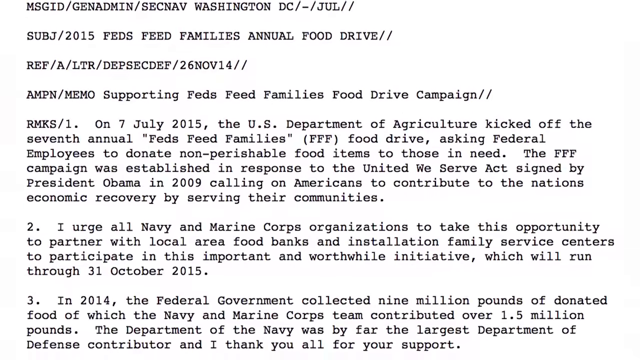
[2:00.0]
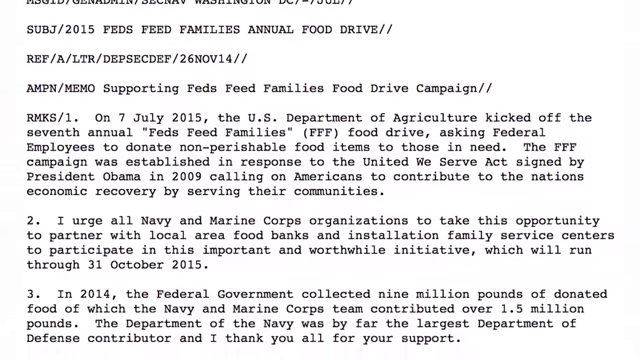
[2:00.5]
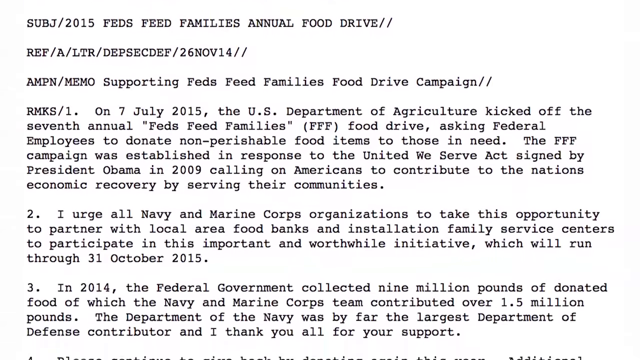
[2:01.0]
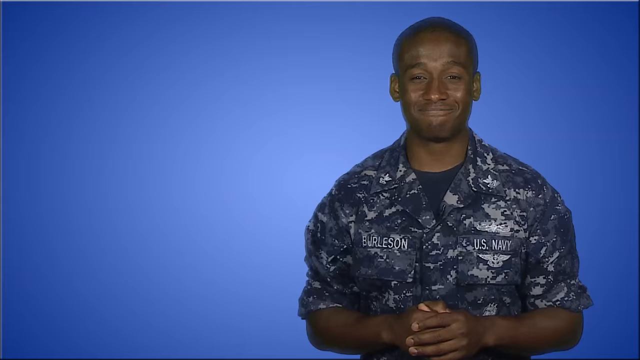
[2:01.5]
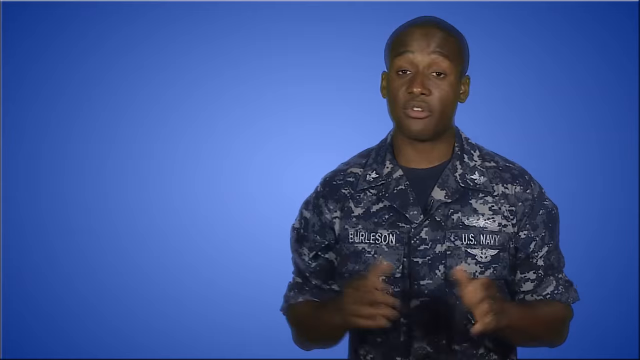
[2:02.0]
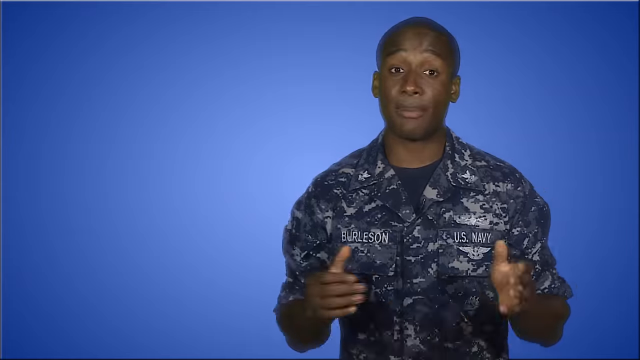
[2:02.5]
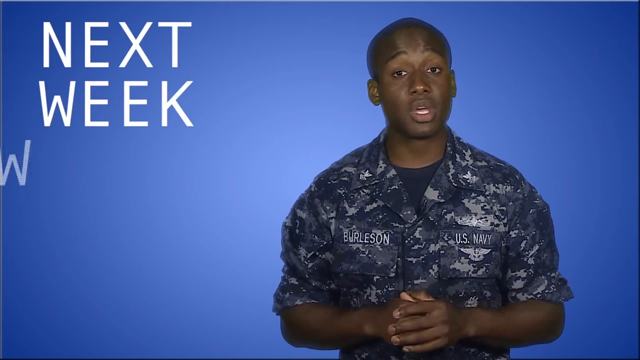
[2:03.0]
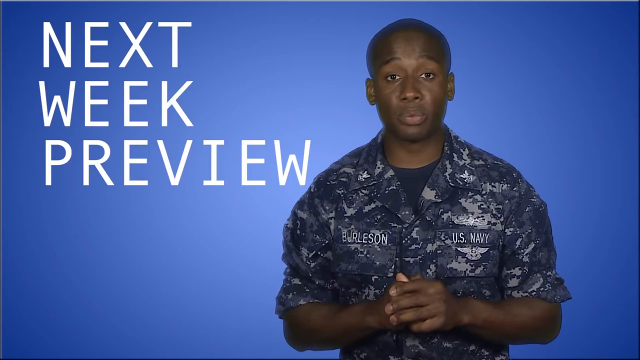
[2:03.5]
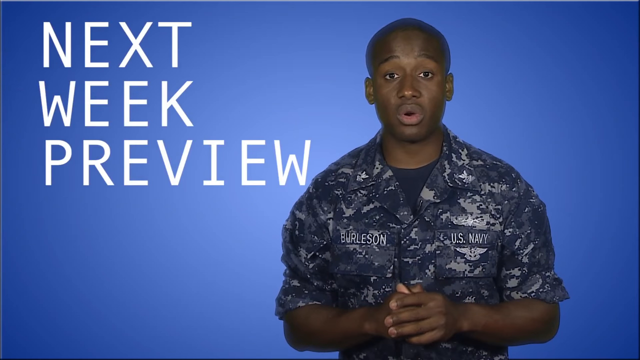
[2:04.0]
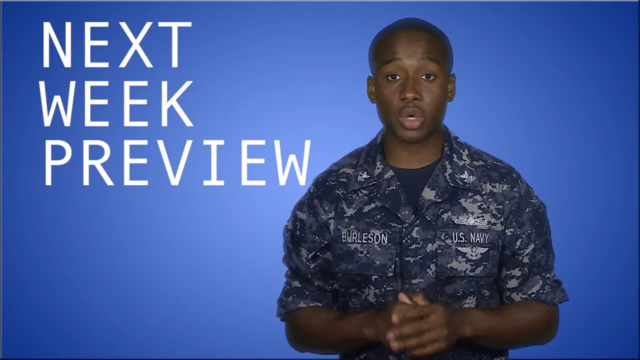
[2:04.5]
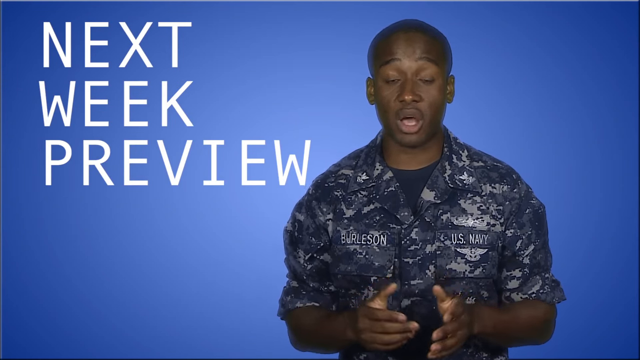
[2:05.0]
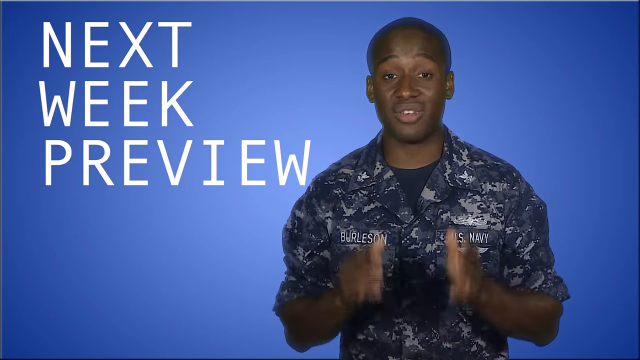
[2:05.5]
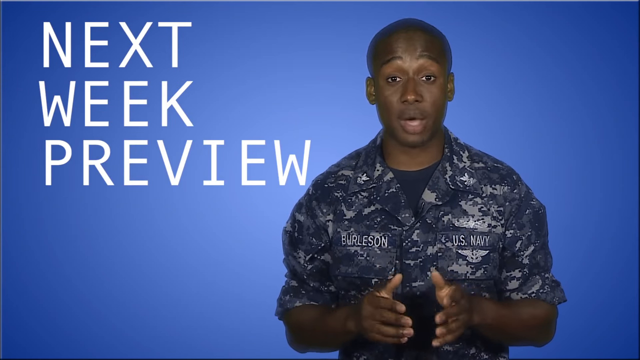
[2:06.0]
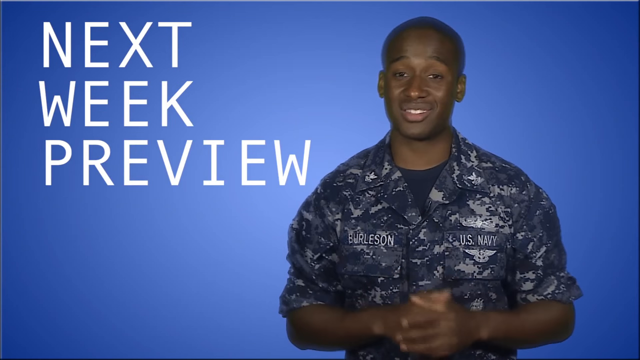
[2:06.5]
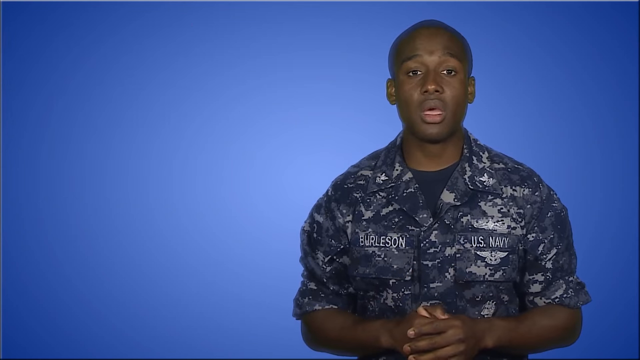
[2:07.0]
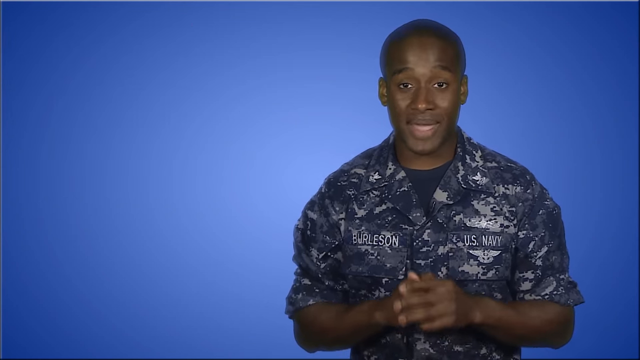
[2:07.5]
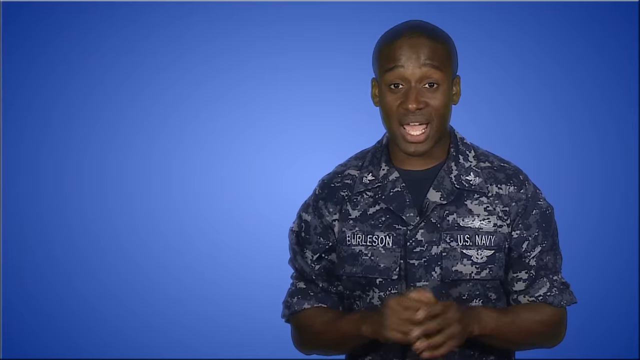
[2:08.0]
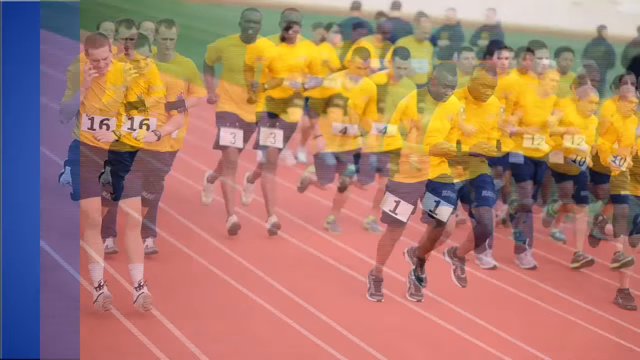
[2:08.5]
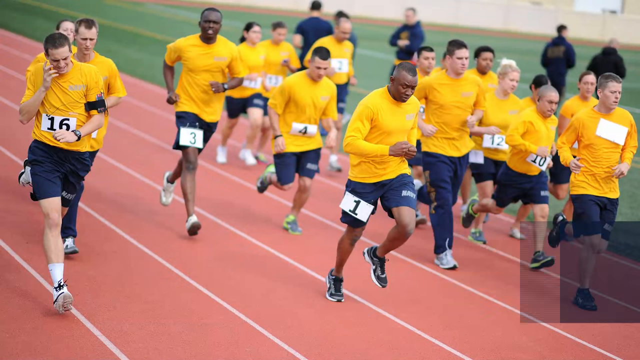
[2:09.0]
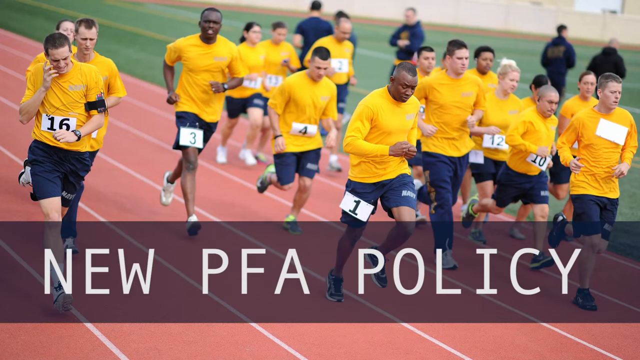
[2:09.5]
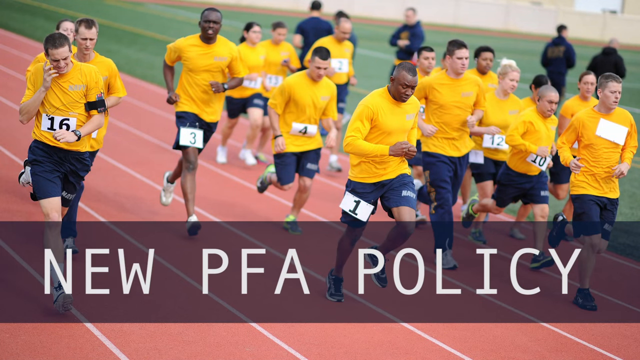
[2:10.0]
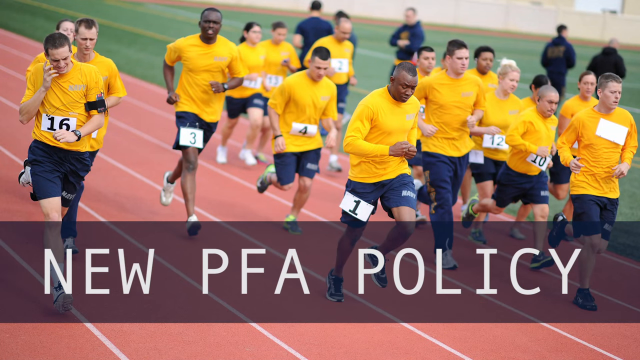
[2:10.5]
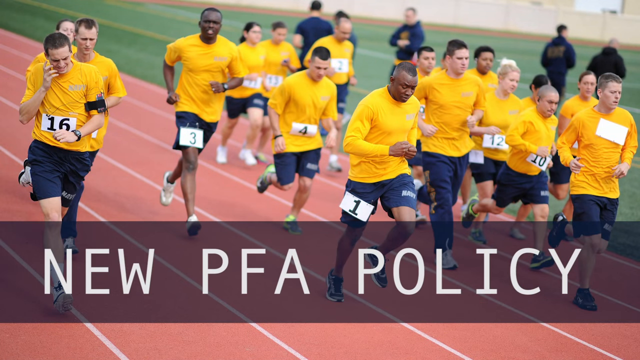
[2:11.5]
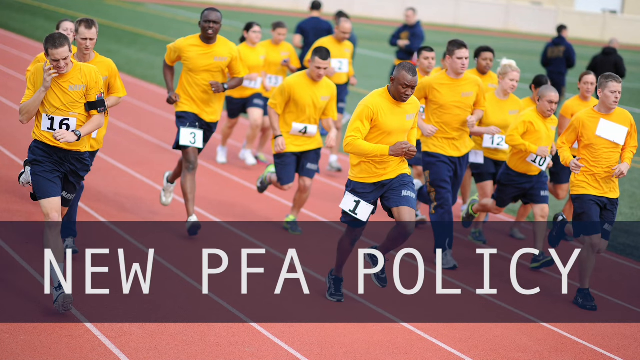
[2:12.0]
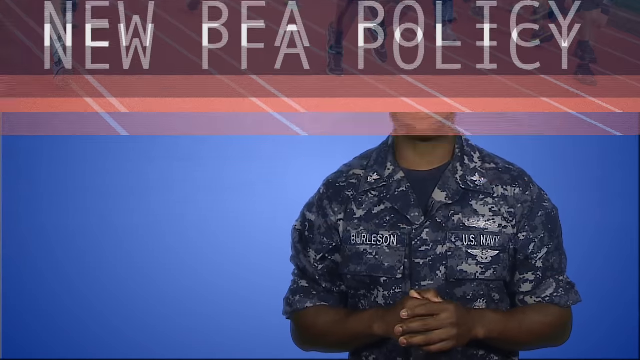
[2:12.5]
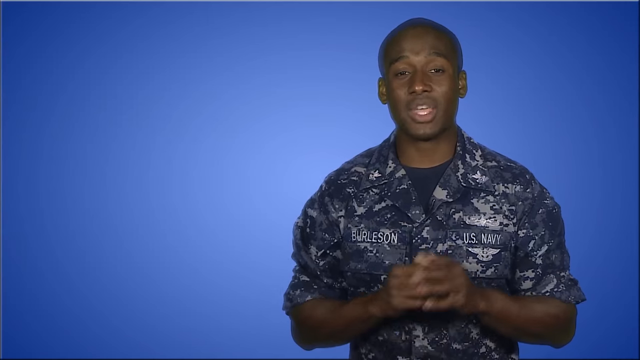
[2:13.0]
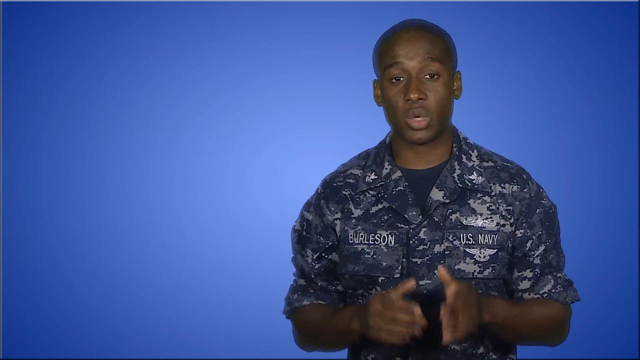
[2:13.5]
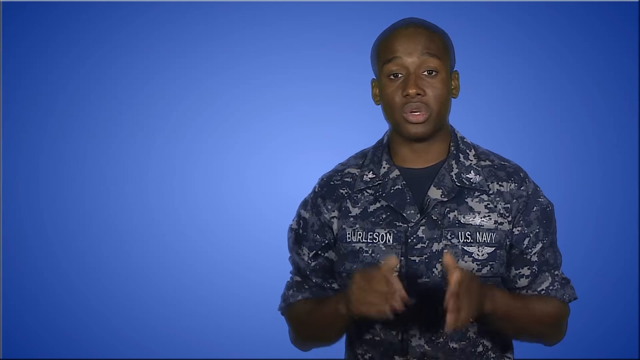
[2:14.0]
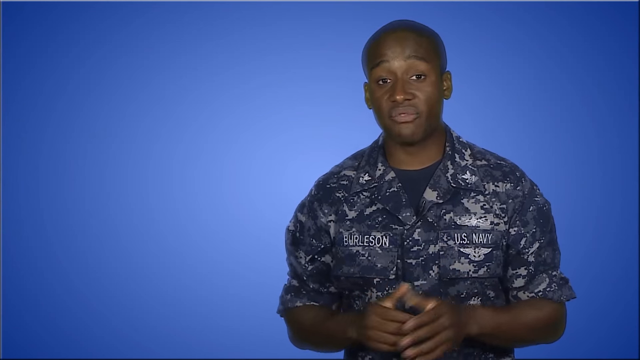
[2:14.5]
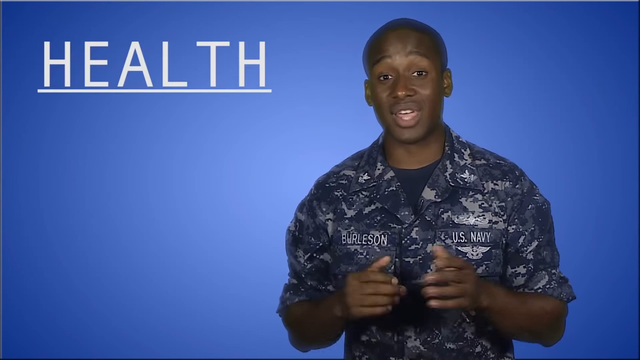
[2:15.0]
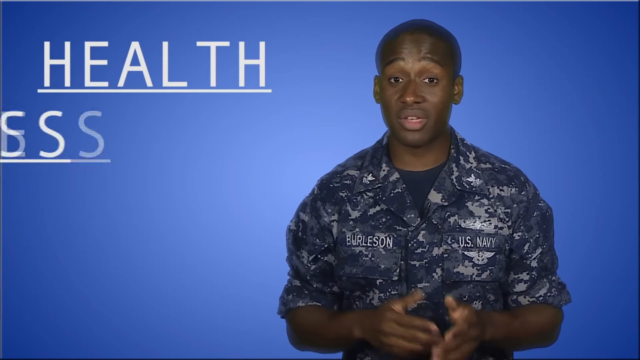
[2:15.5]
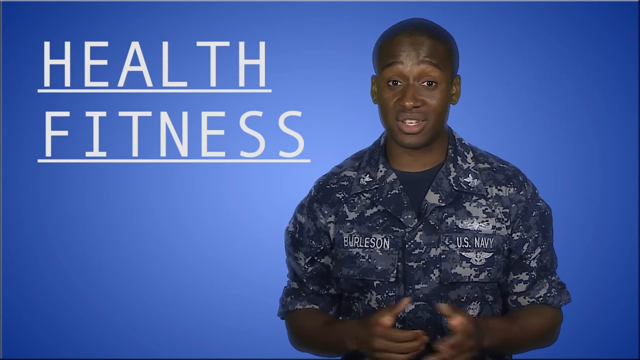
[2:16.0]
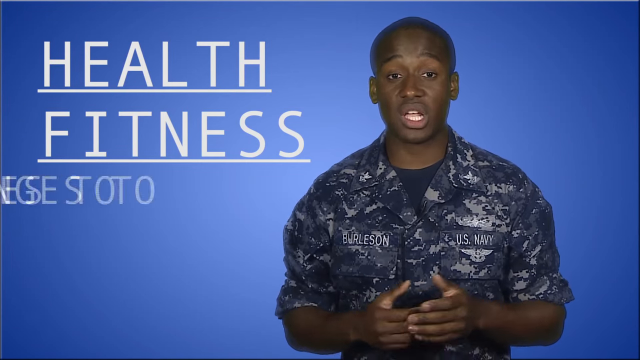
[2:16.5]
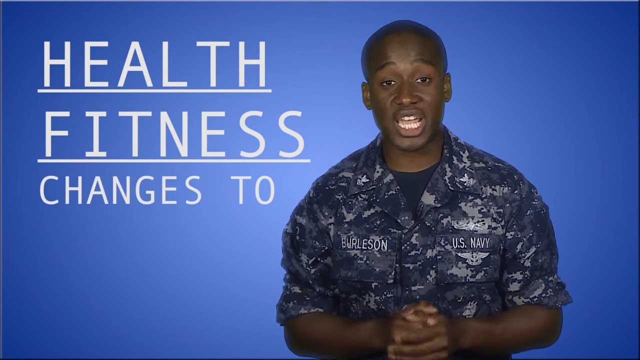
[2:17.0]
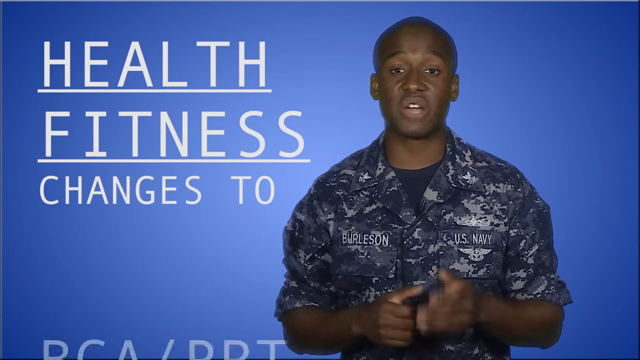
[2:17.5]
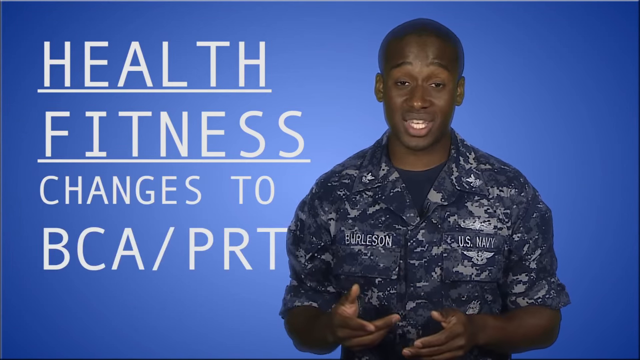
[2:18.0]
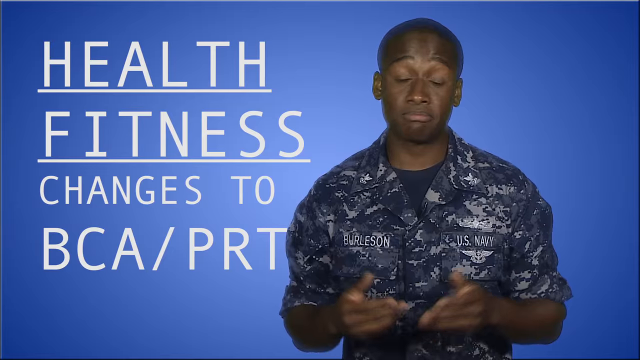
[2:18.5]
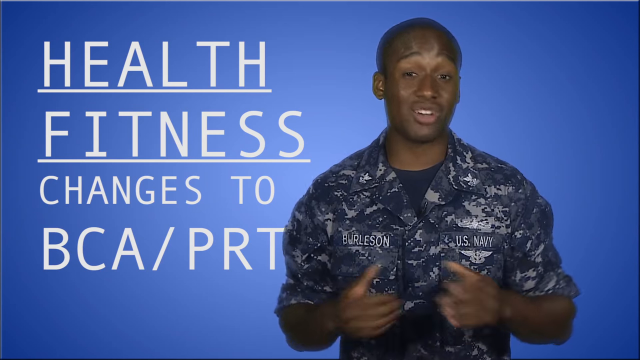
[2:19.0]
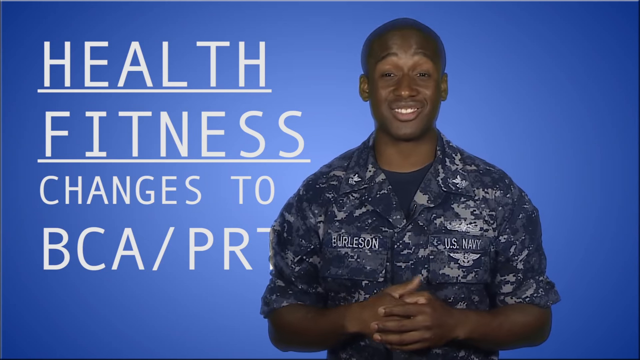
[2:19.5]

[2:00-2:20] A white screen that seems to be a document shows the subject "2015 Feds Feed Families Annual Food Drive" and seems to give information about the food drive kicking off on July 7th, 2015, with three numbered paragraphs about the event. The camera scrolls down the page. Then, against a blue screen, a young Black male Navy officer with the last name Burleson talks to the camera, holding his hands straight out in front of him and then clasping them over his stomach. In the top left of the screen, large white letters read "next week preview." After he talks for a bit, the screen changes to a still image of what looks like a race on a track, with all the runners wearing yellow shirts and dark shorts, and text at the bottom reading "new PFA policy." The video returns to the blue screen with Officer Burleson, who continues speaking to the camera as large white letters in the top left read "health fitness changes to BCA /PRT."